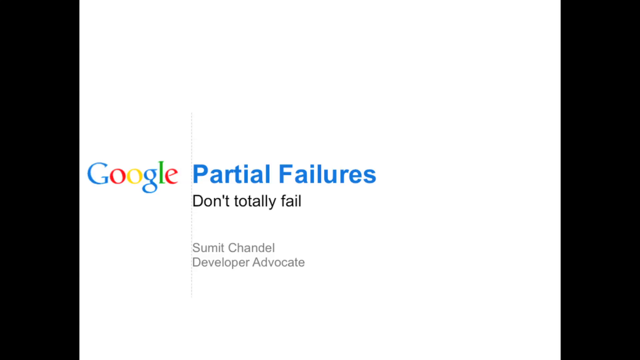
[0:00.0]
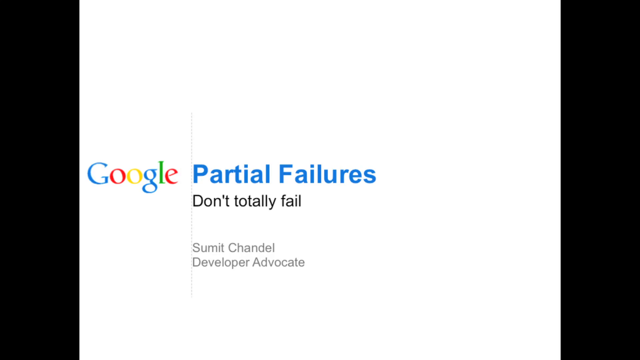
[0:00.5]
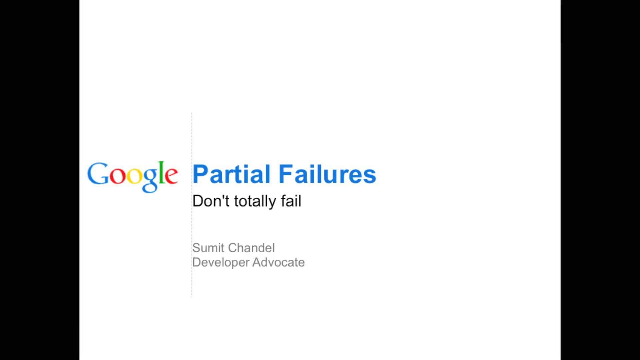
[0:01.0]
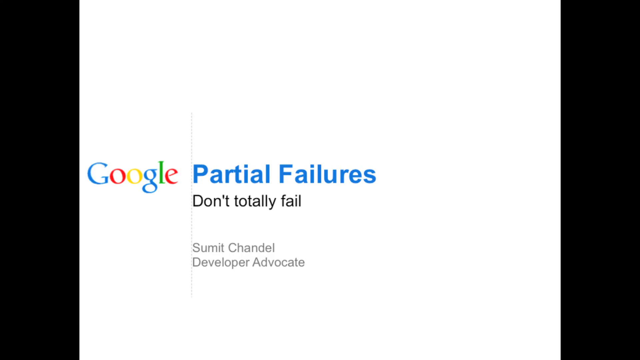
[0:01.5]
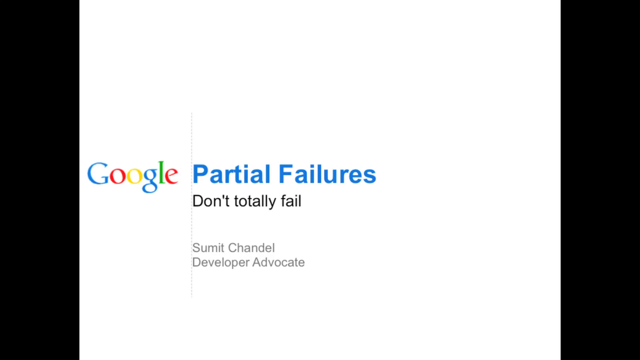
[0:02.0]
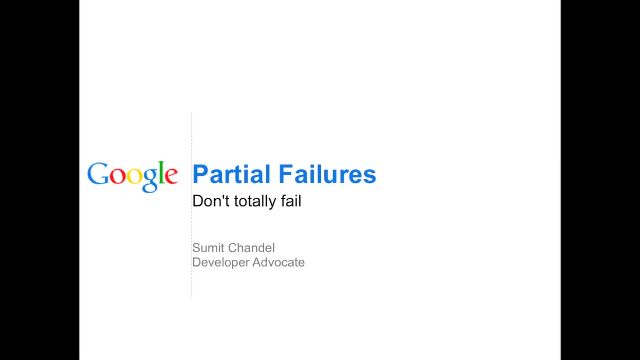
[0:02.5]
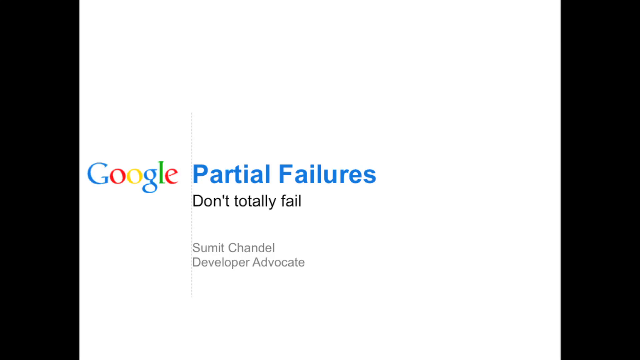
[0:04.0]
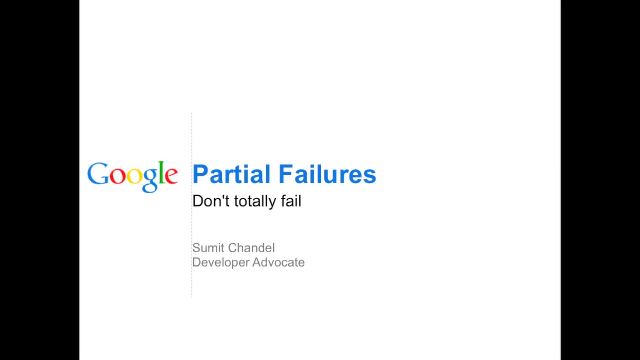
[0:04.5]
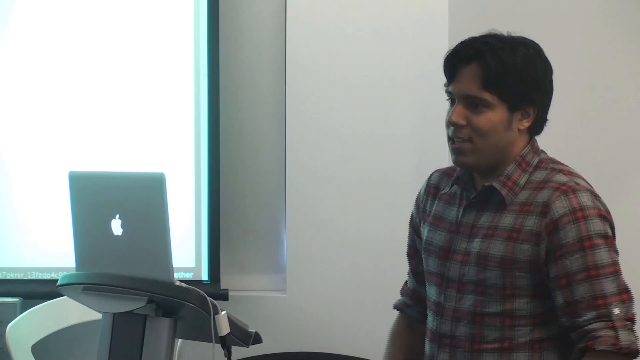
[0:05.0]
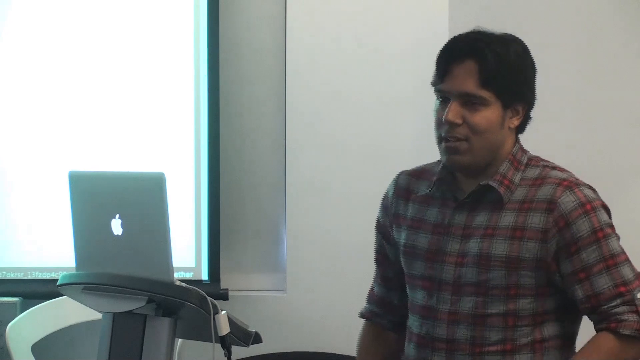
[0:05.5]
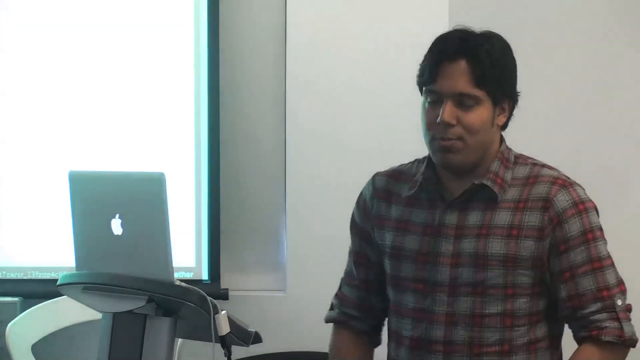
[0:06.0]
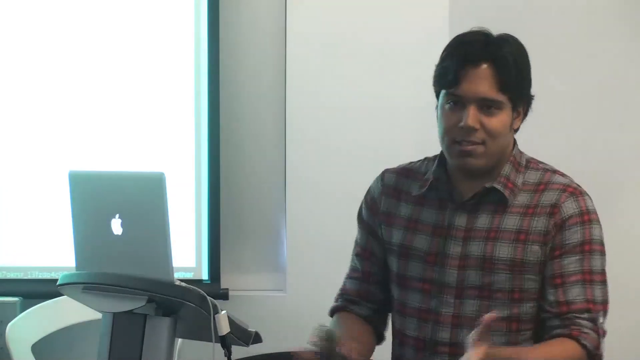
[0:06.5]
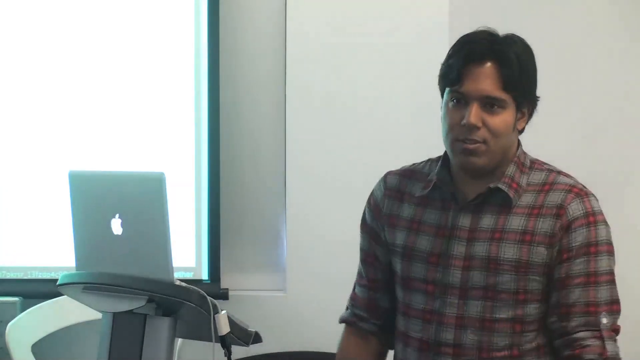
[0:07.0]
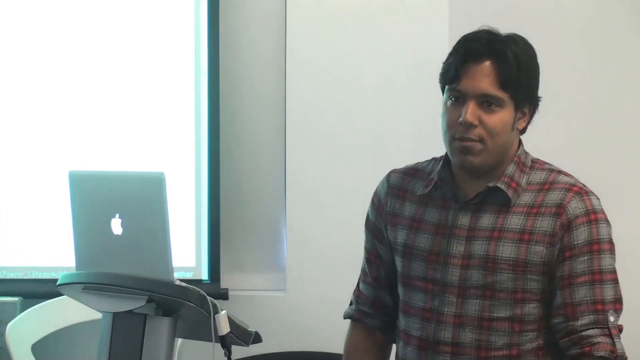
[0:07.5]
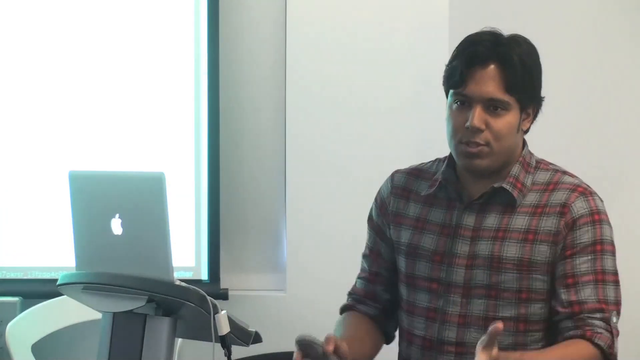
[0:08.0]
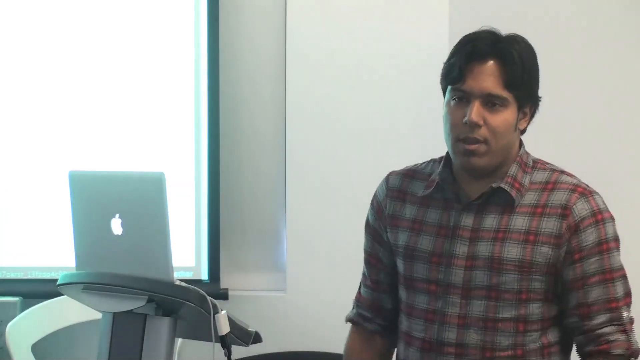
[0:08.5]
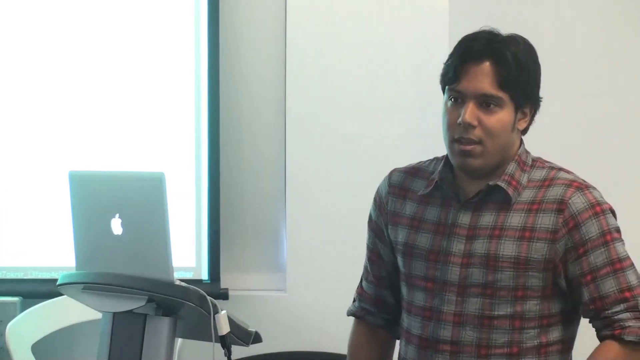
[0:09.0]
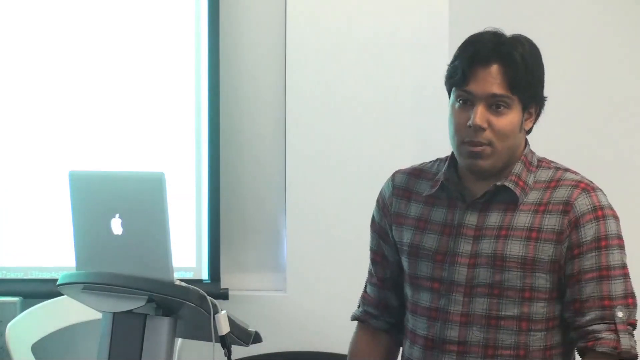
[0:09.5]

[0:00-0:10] The video opens on the Google logo, followed by text reading "partial failures" and "don't totally fail," along with a name ending in "Chandel." A person then appears, apparently the presenter, talking with a MacBook open. They seem to be a young adult of Indian descent, possibly in their 20s, with a short haircut, wearing what looks like a flannel-ish shirt, apparently checkered and reddish, with the sleeves rolled up. The camera pans back to the presentation and continues going back and forth between it and the person talking.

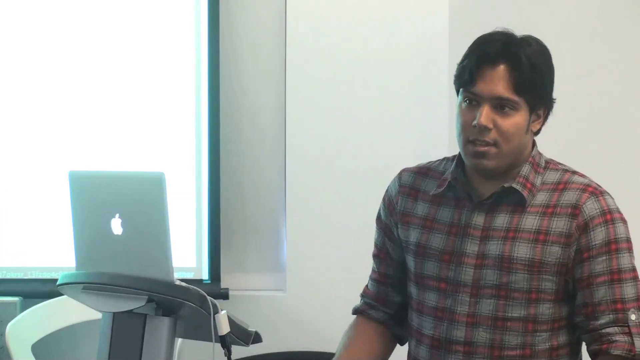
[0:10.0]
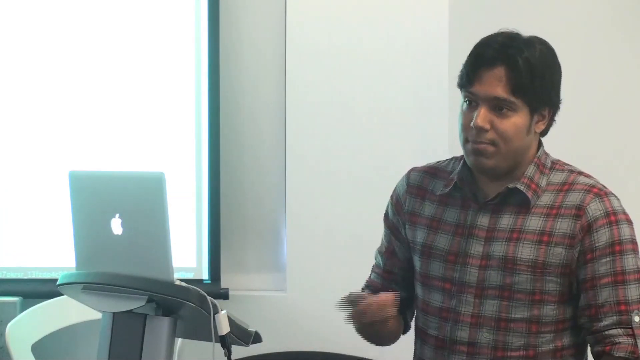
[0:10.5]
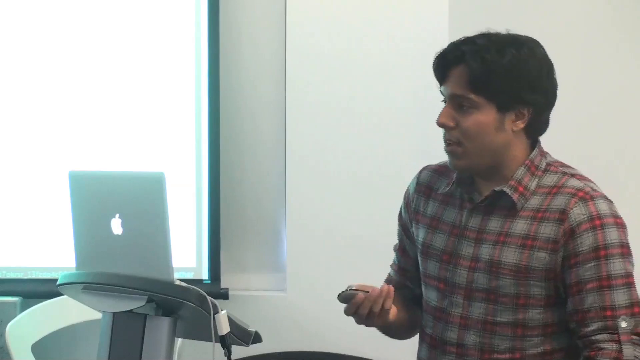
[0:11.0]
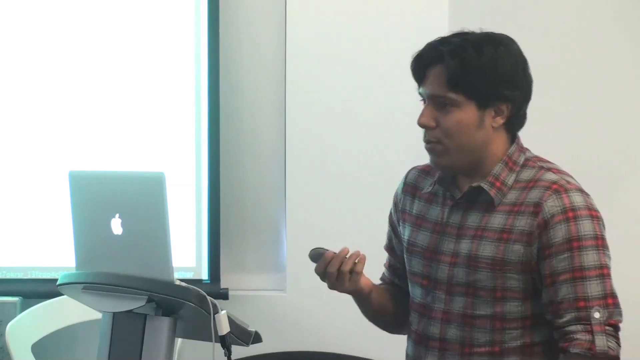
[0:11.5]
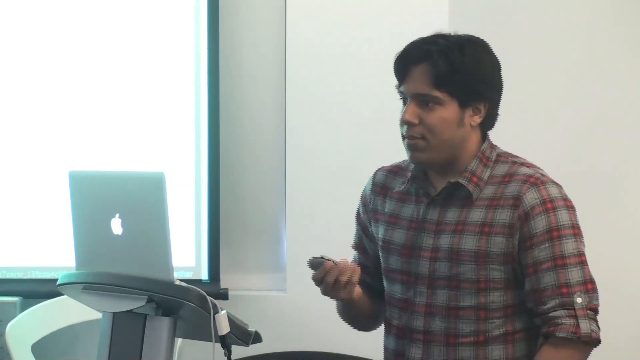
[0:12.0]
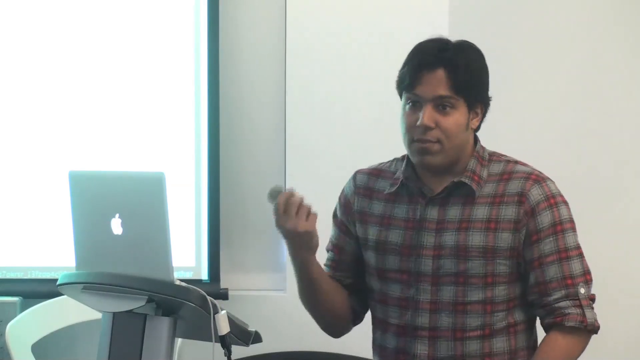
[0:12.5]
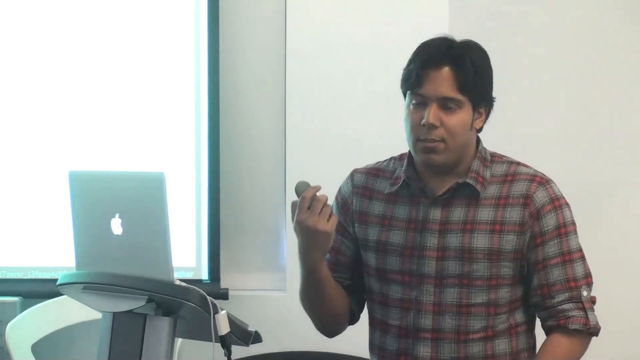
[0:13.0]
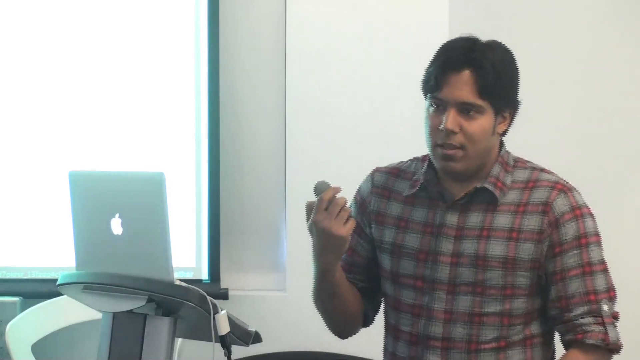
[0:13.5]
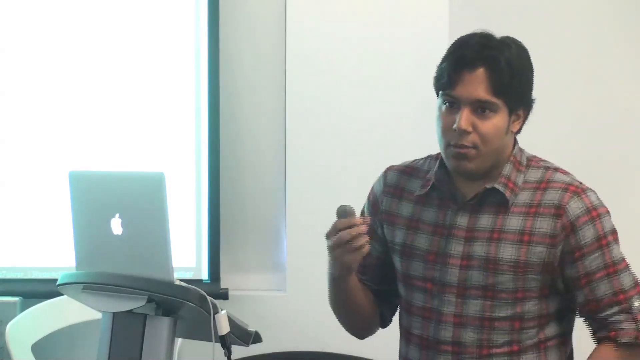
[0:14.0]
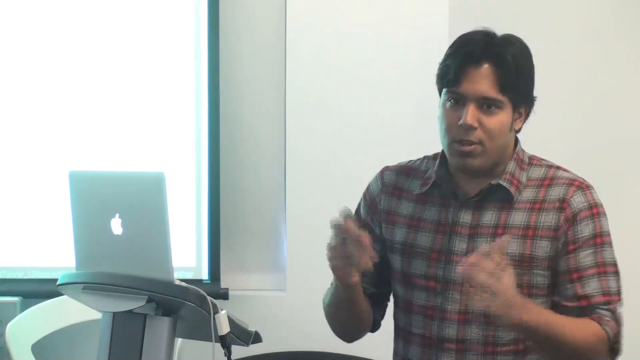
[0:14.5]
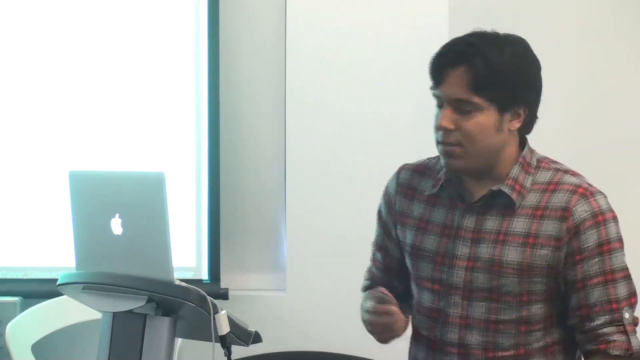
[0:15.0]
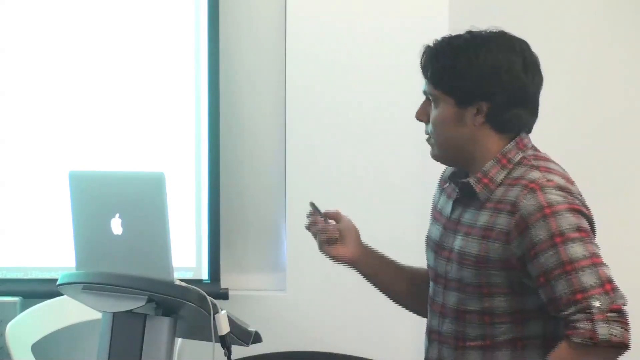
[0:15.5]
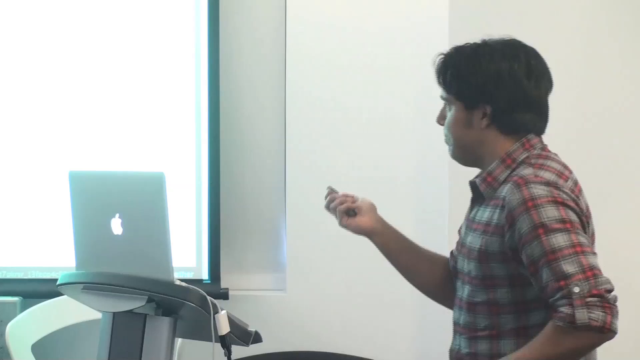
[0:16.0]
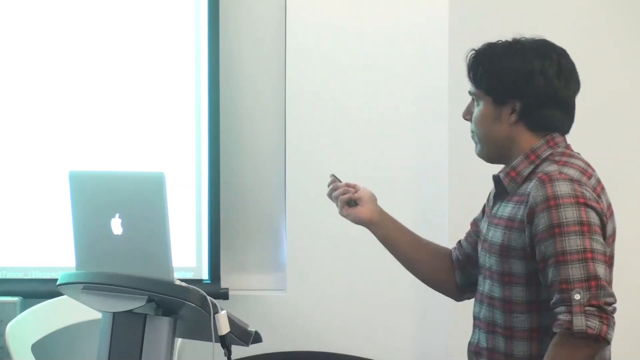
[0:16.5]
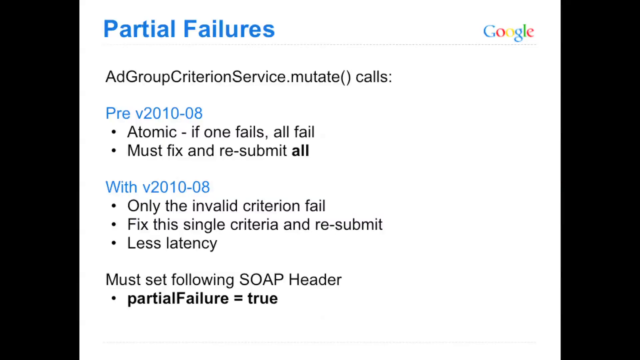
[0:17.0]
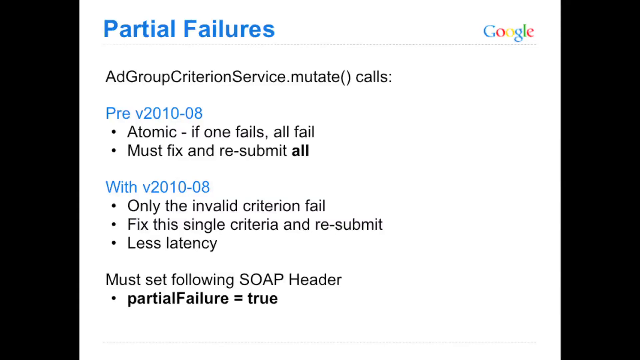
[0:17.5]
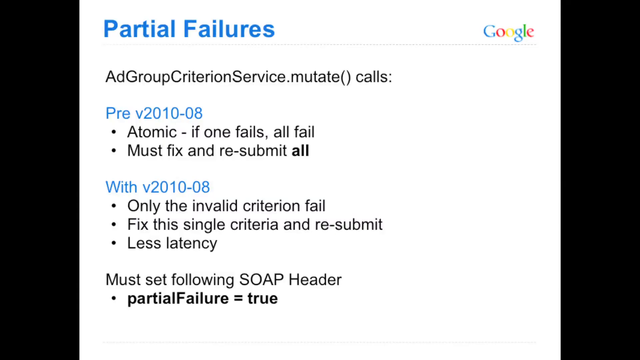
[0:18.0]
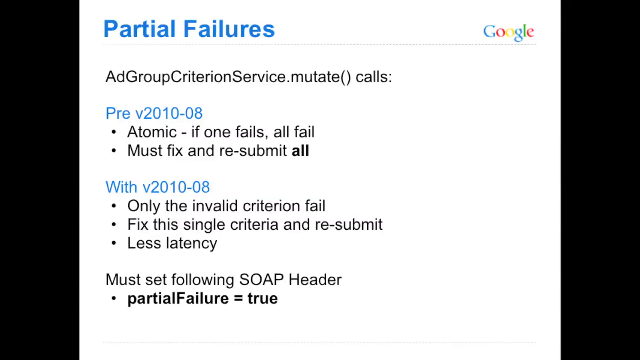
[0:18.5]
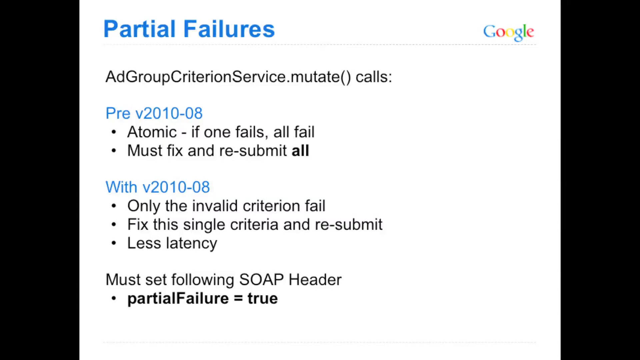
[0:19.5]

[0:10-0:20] The young presenter in the flannel shirt stands in what is a white room of sorts, motioning with their hand. They hold what seems to be a slide remote for switching the PowerPoint. As they turn, they push a button and a slide pops up reading "Partial Failures." Below it is "Ad Group Criterion Service" followed by a dot and the letters M-U-T-A-T-E, closed parentheses, and the word "Calls." After that is some information, possibly about a product, with two bulleted lines of text underneath, followed by another subheading in the same format.